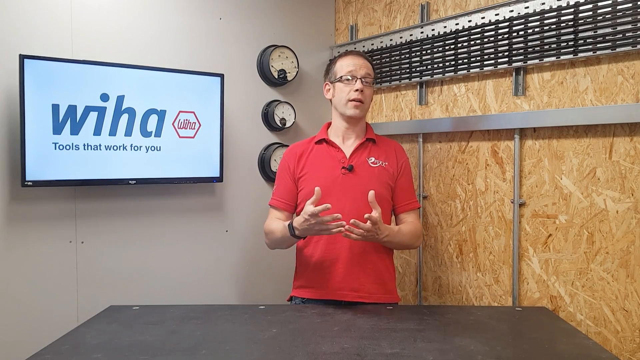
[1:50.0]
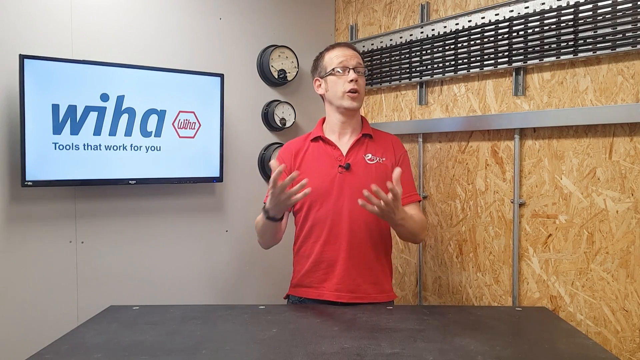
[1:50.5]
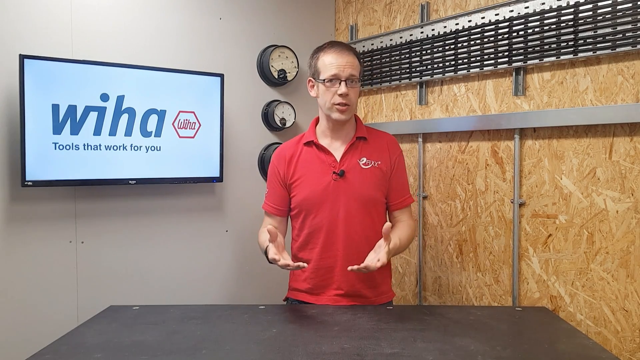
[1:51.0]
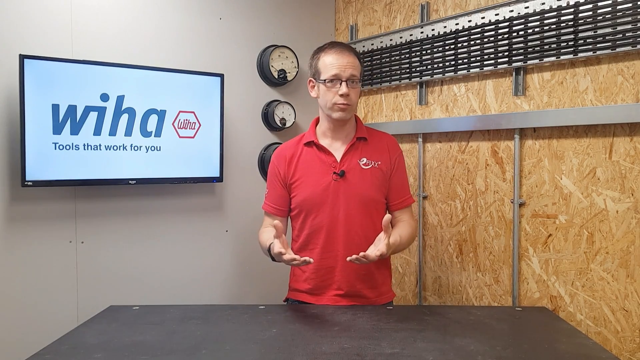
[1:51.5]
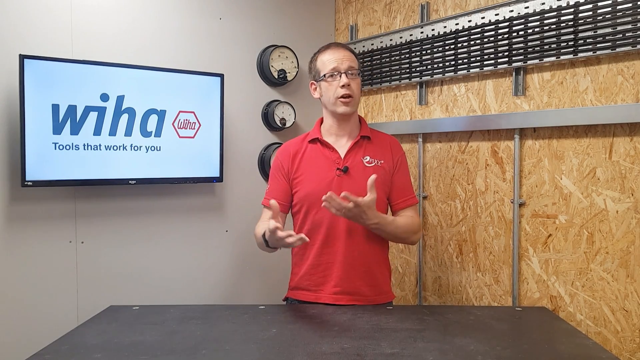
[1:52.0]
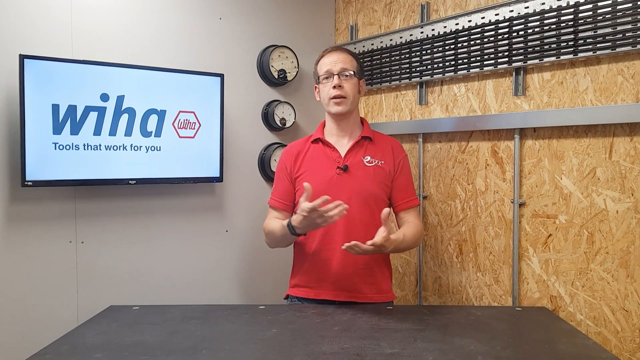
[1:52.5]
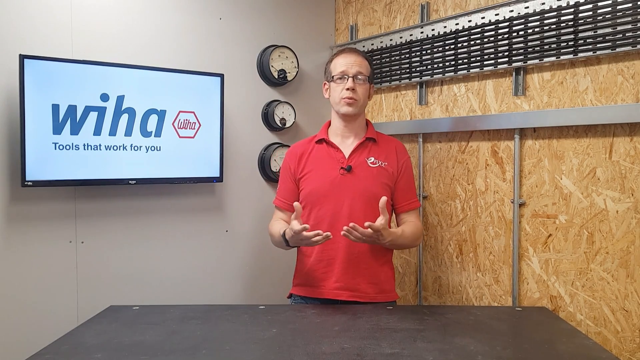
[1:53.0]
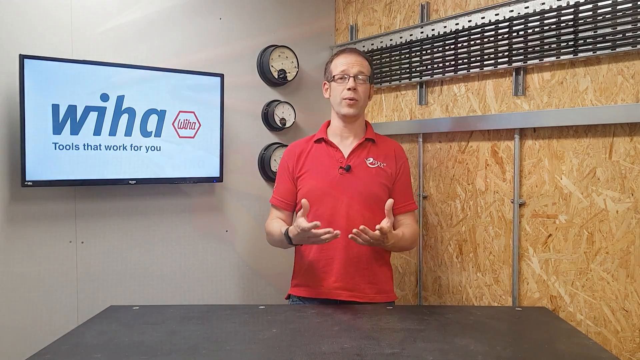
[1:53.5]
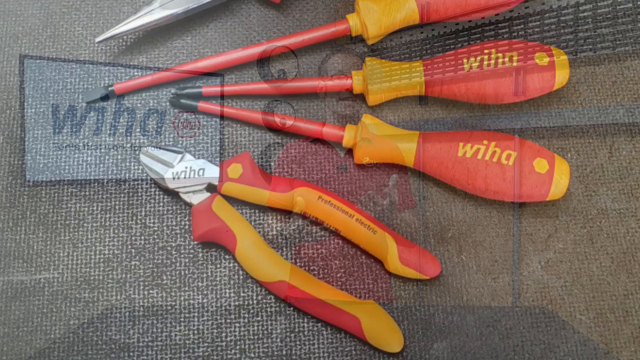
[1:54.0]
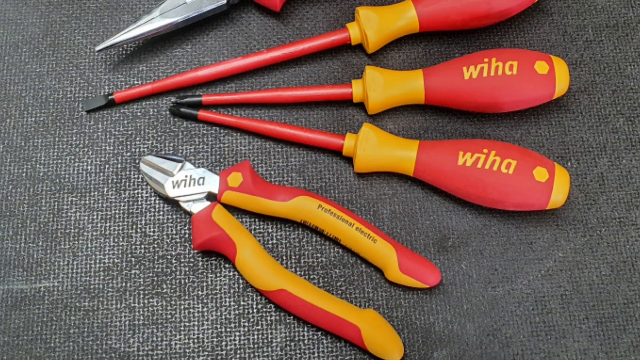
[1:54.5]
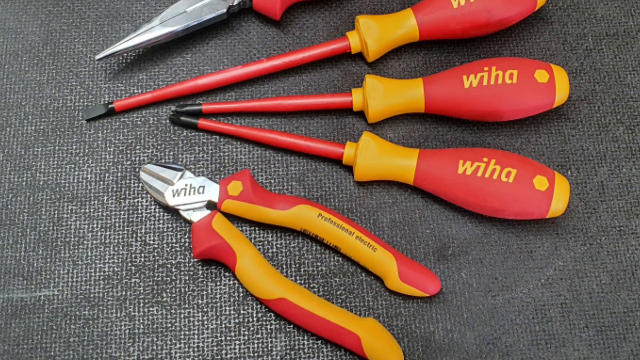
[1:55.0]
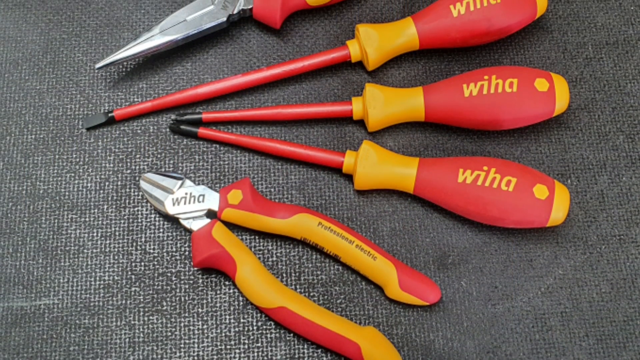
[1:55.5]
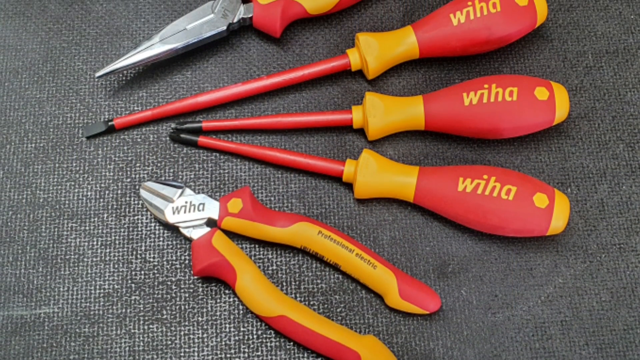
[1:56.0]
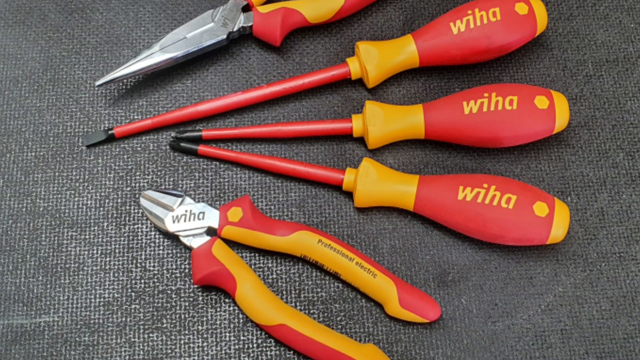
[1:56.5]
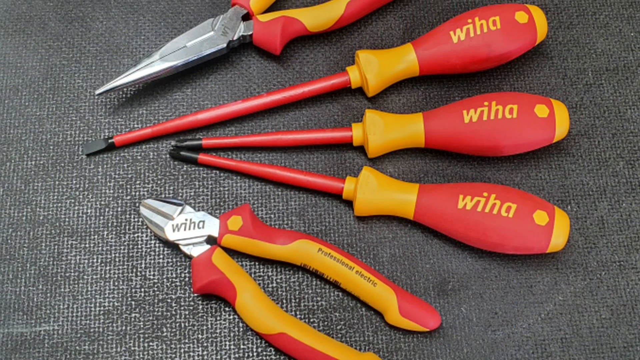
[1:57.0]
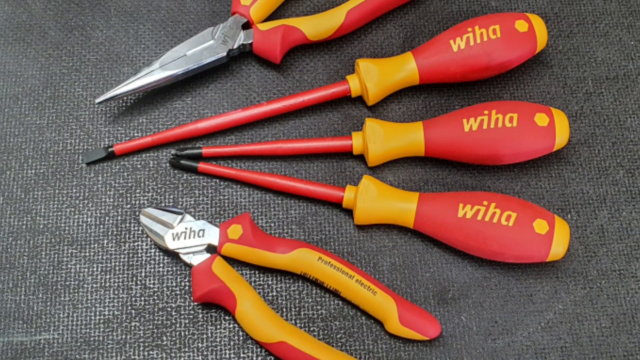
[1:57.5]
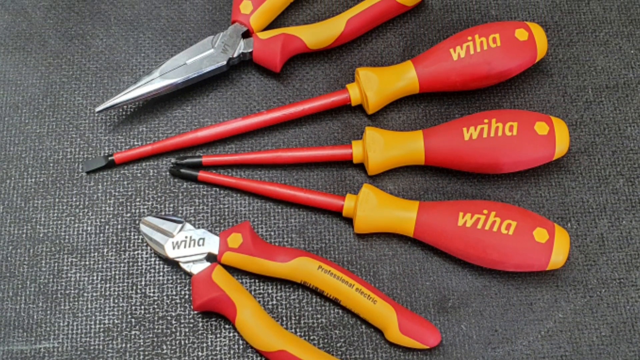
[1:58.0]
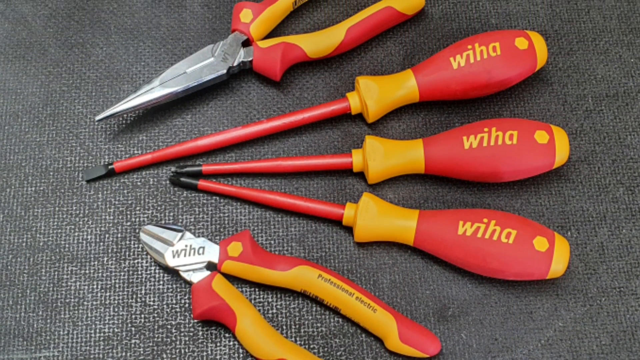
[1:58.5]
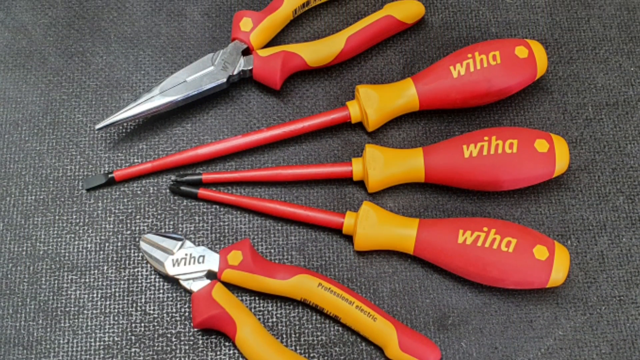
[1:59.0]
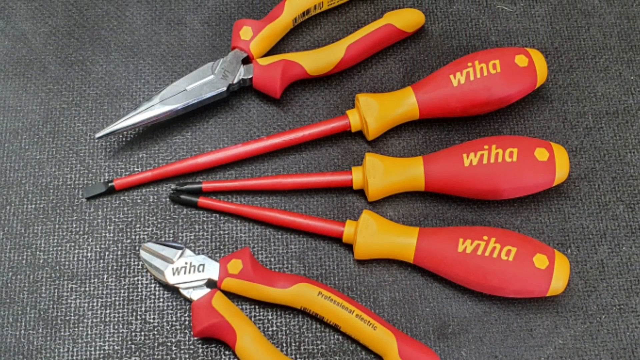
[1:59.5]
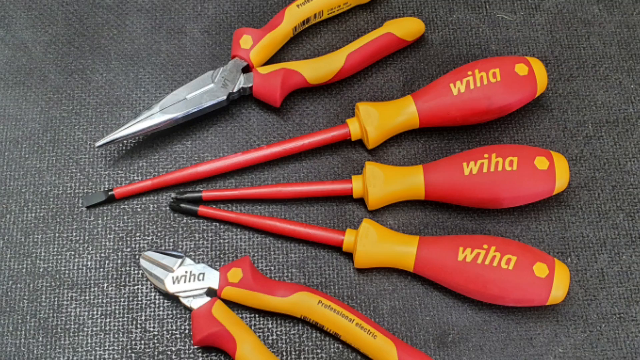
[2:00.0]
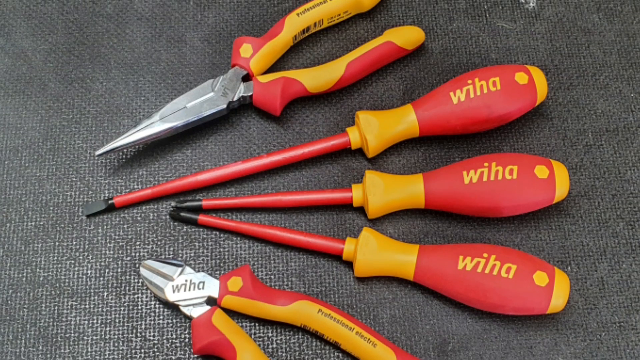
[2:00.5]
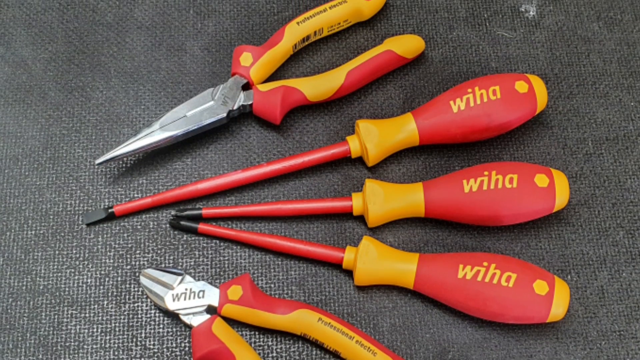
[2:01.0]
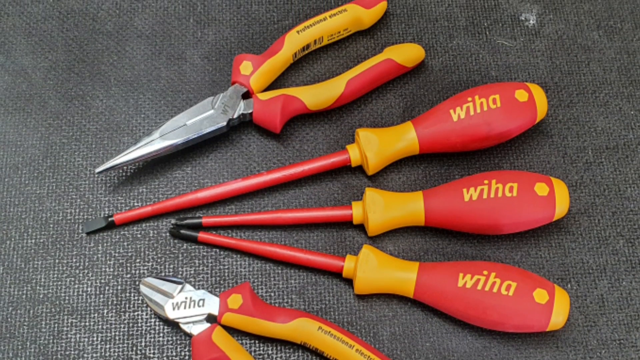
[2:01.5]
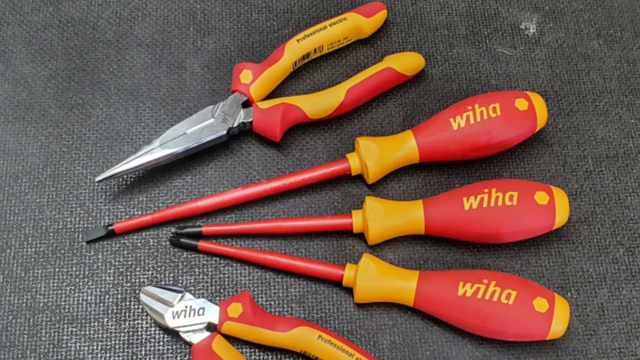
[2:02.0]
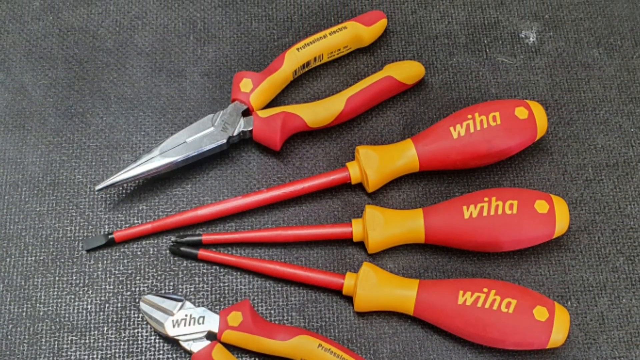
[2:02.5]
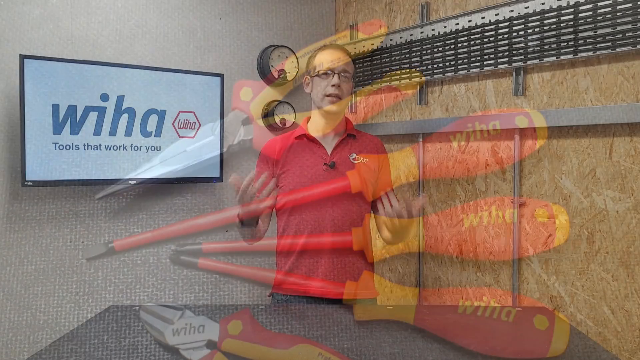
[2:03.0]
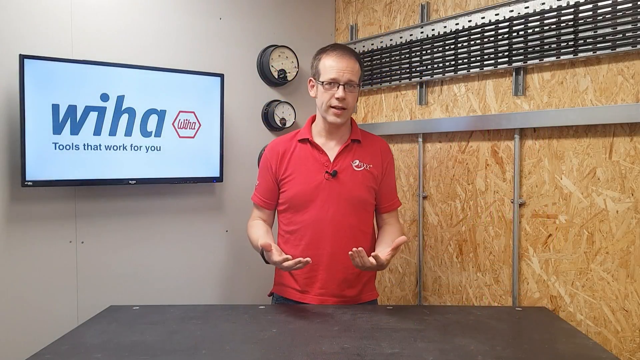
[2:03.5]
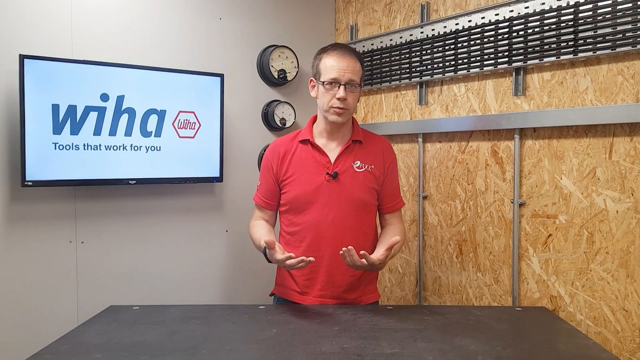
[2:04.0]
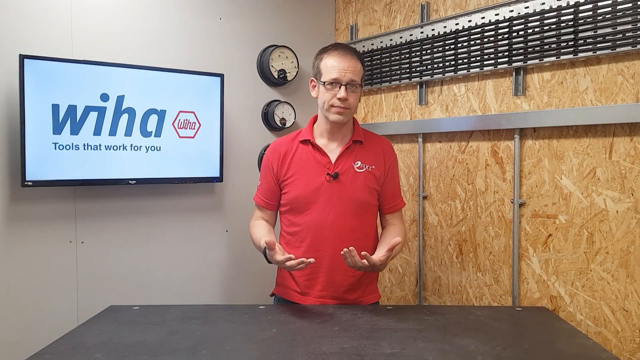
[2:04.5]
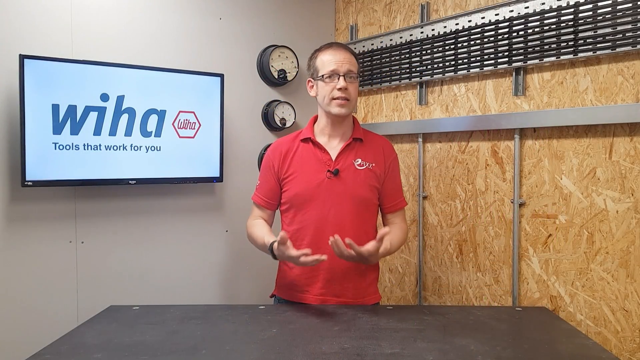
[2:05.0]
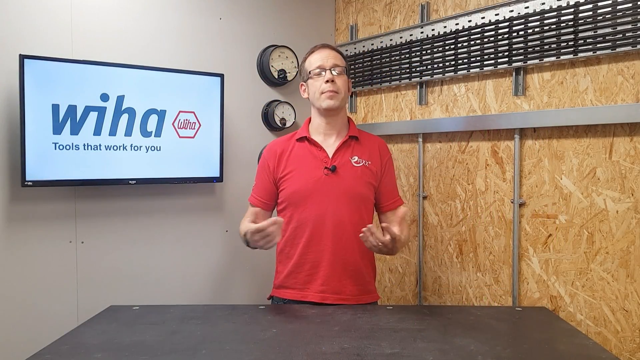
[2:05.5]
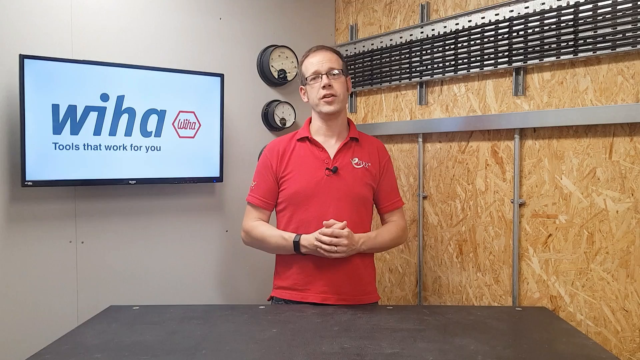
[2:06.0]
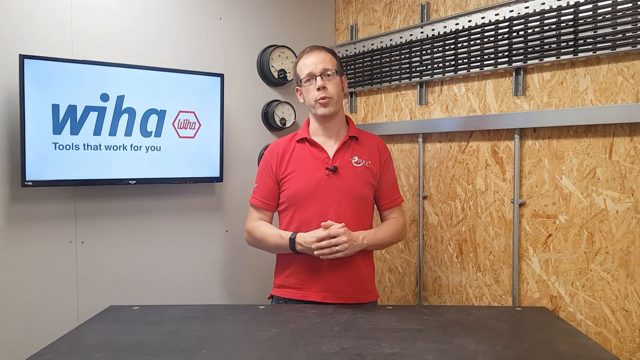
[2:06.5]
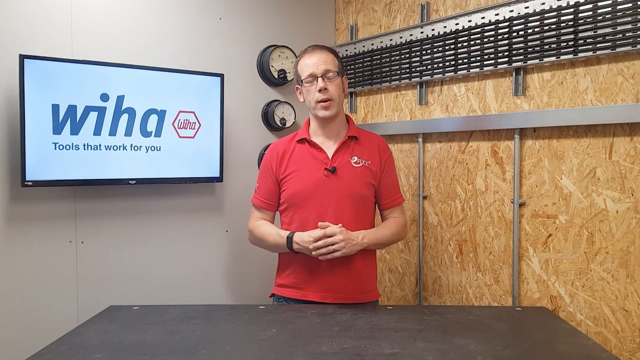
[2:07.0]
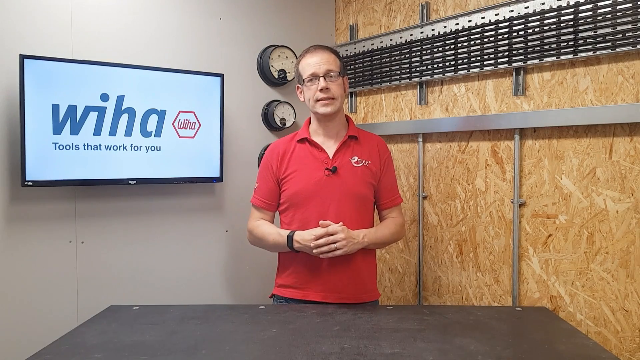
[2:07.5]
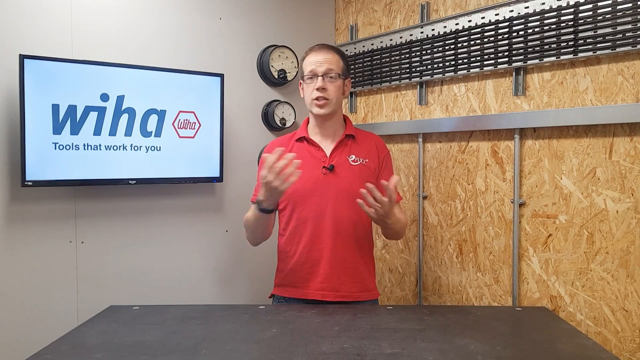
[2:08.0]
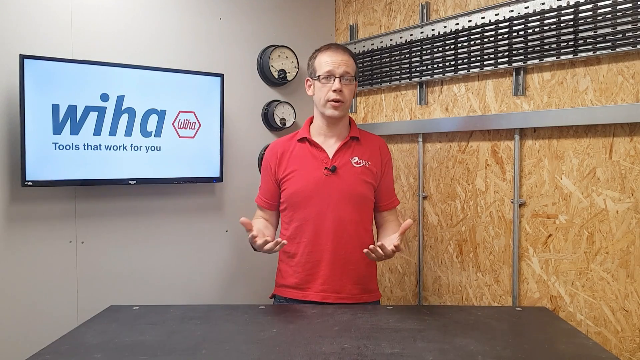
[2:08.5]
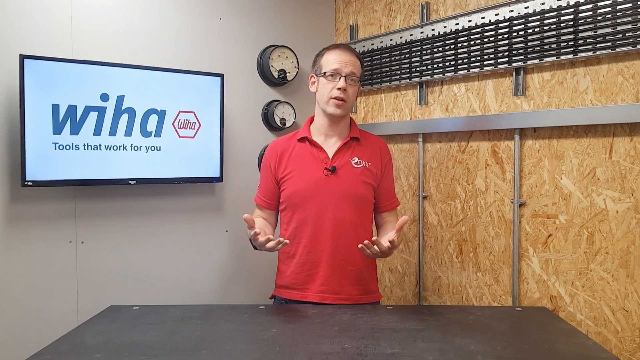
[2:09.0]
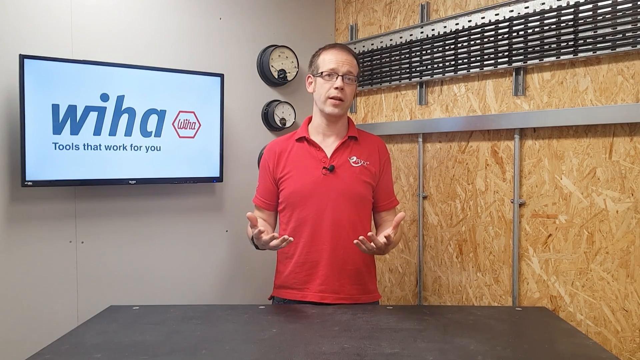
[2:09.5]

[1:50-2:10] The video starts close up on the man talking. The next screen shows an image of actual WIHA tools, about five or six of them on a tabletop, which look like pliers, cutters, flatheads and screwdrivers. They have long, rugged, rubberized handles and look tough and robust. The handle tips are kind of gold, yellowish and red, and all the tools appear to have this rubberized gold and red coloration. The tools are not used in a live demonstration. The man in the red t-shirt uses his hands expressively while talking.